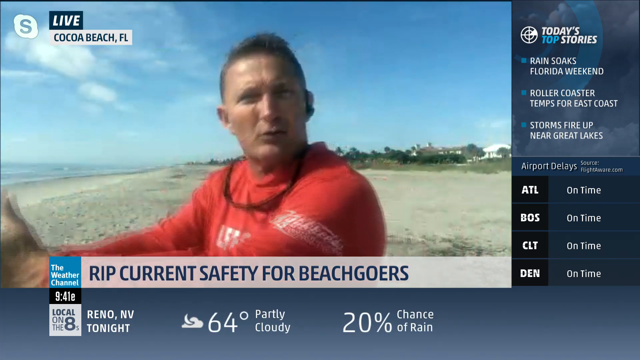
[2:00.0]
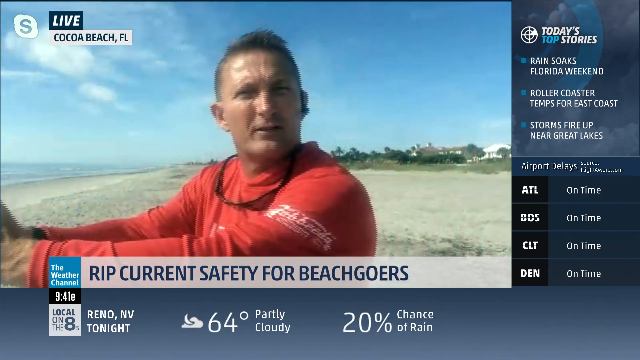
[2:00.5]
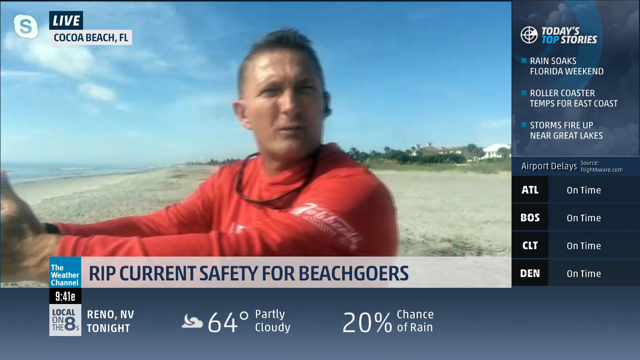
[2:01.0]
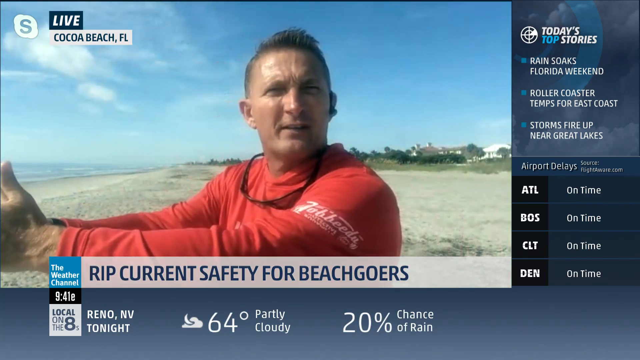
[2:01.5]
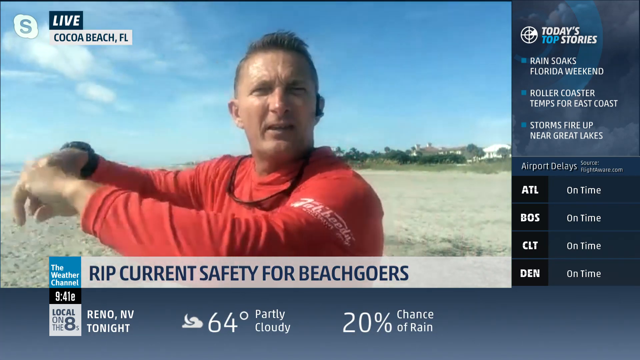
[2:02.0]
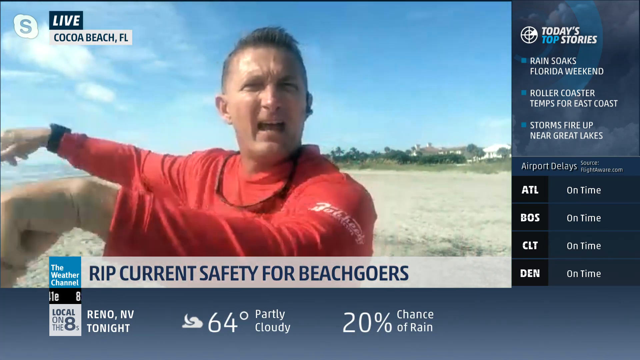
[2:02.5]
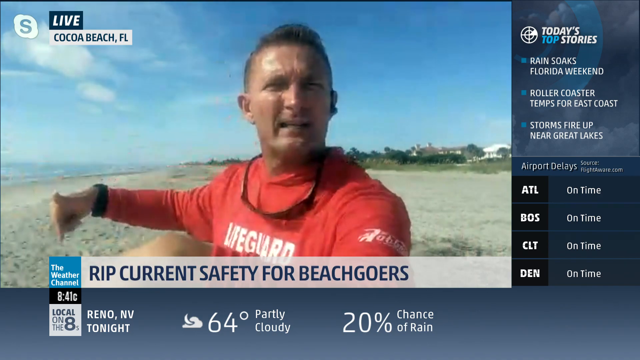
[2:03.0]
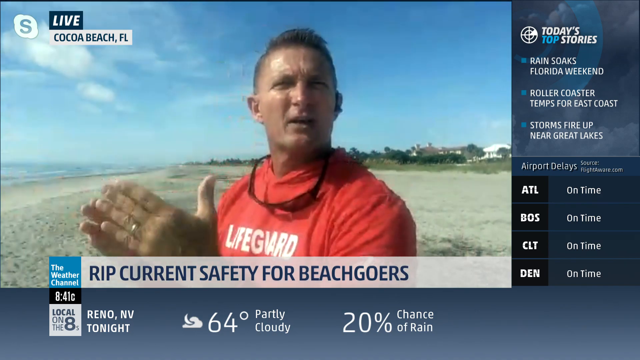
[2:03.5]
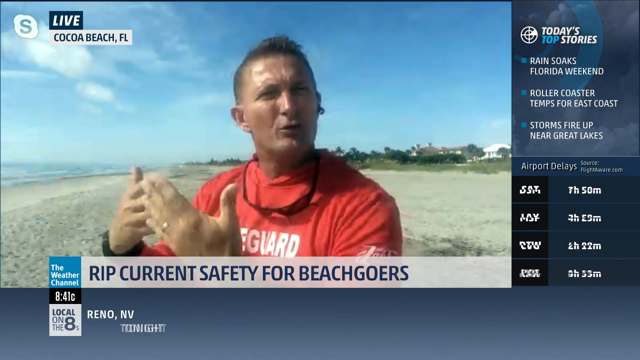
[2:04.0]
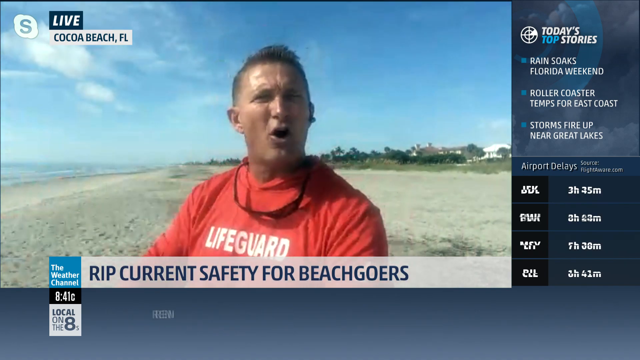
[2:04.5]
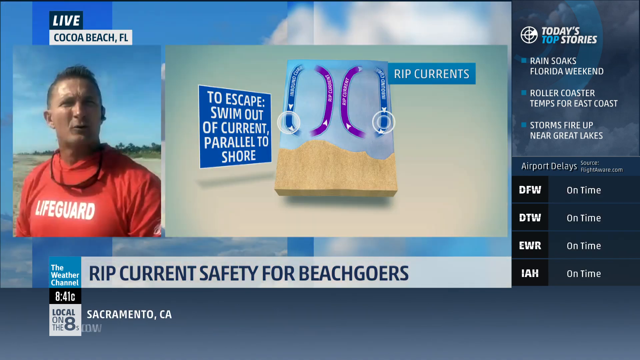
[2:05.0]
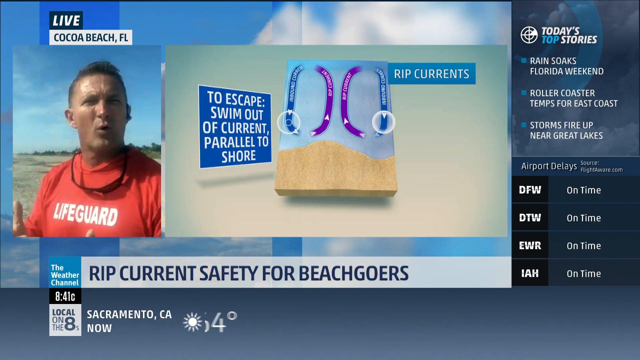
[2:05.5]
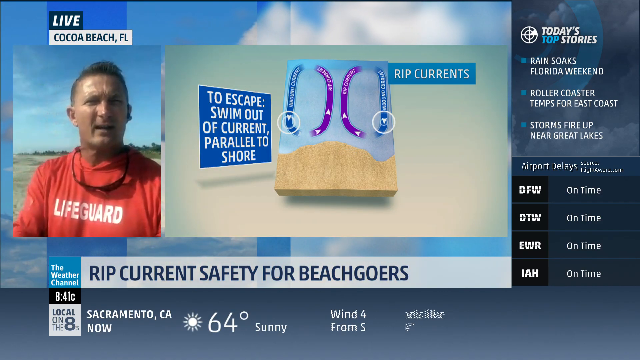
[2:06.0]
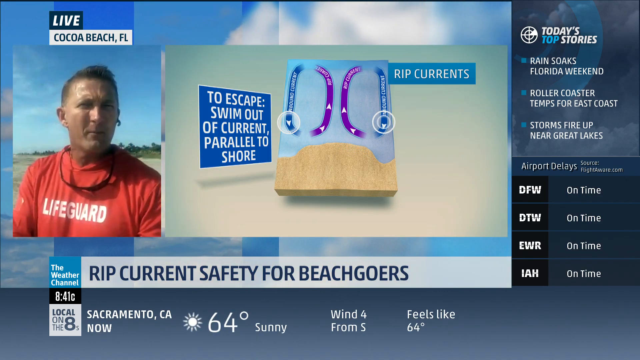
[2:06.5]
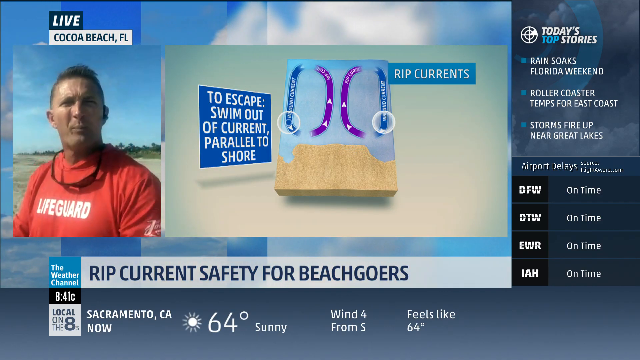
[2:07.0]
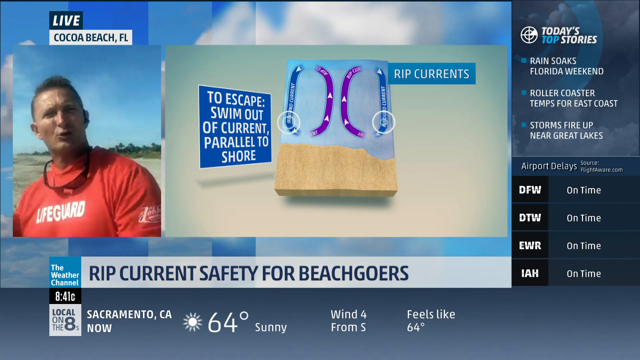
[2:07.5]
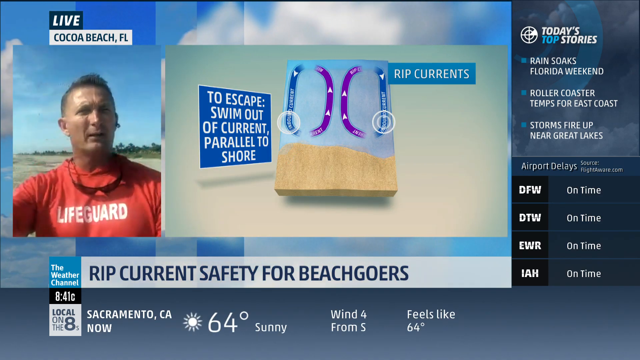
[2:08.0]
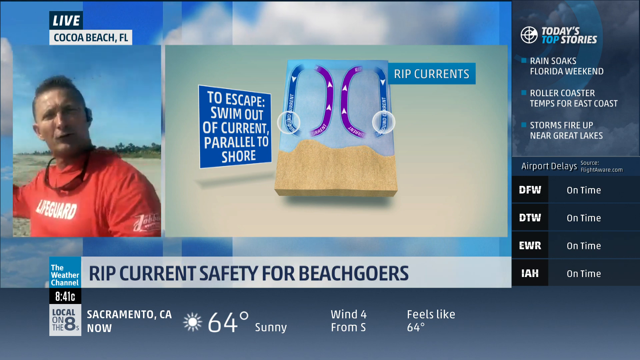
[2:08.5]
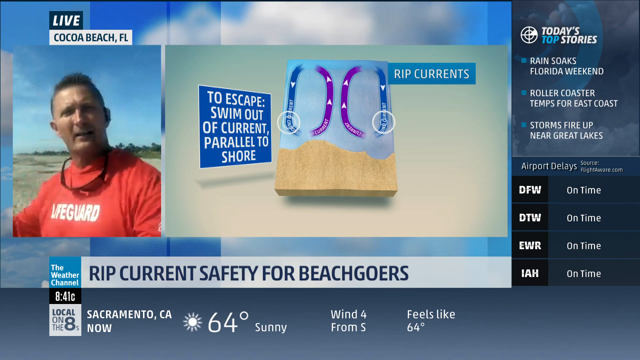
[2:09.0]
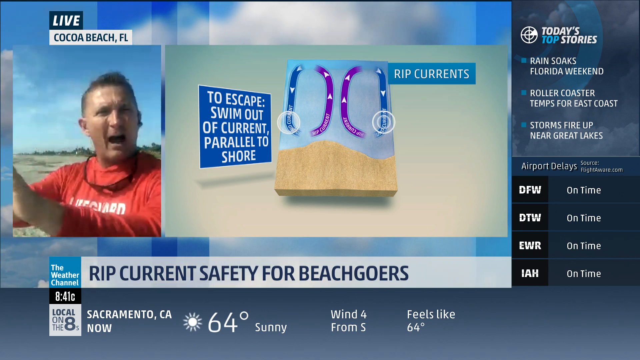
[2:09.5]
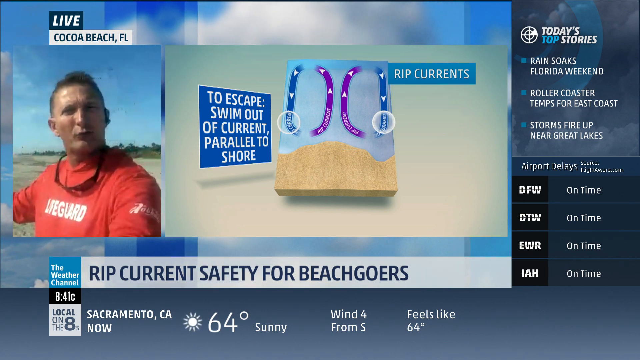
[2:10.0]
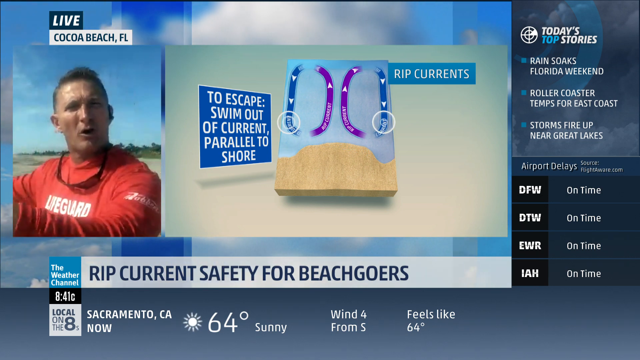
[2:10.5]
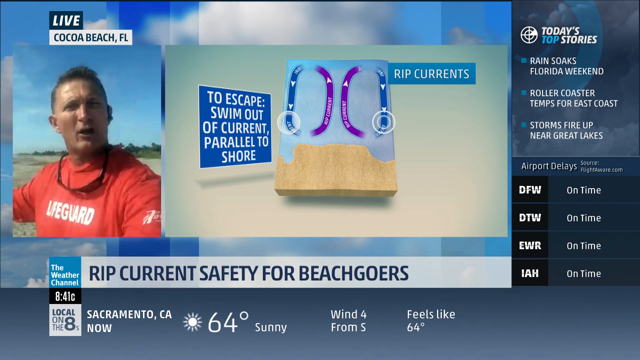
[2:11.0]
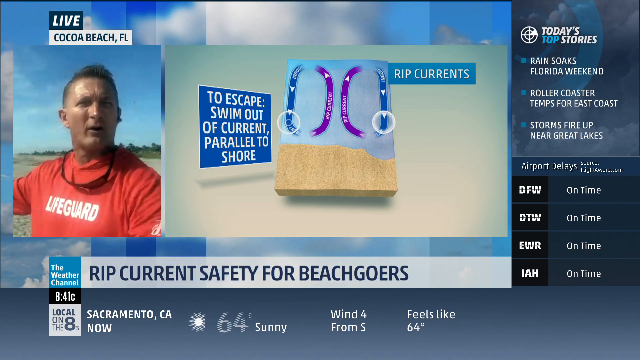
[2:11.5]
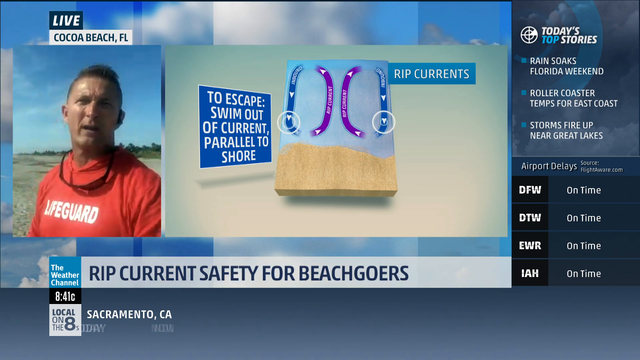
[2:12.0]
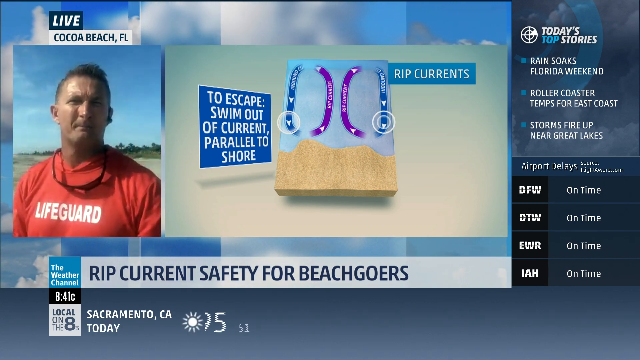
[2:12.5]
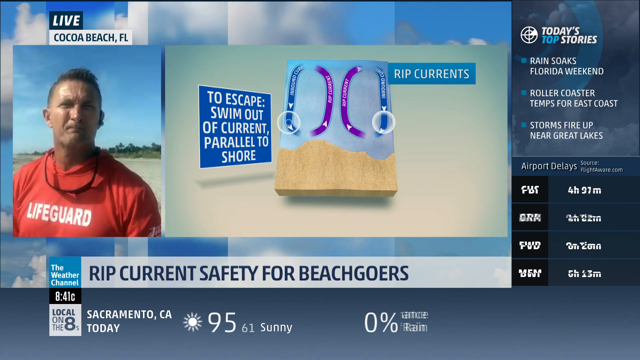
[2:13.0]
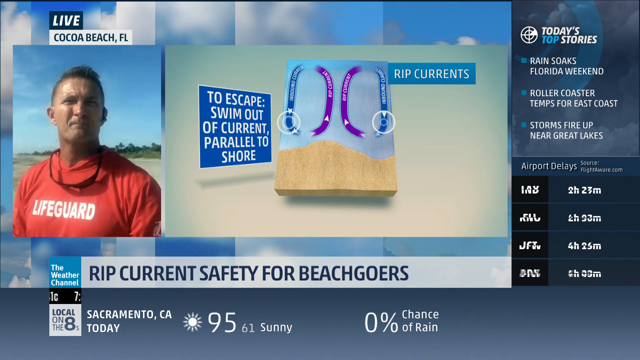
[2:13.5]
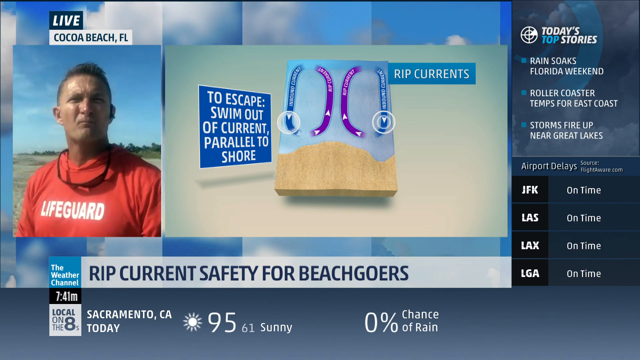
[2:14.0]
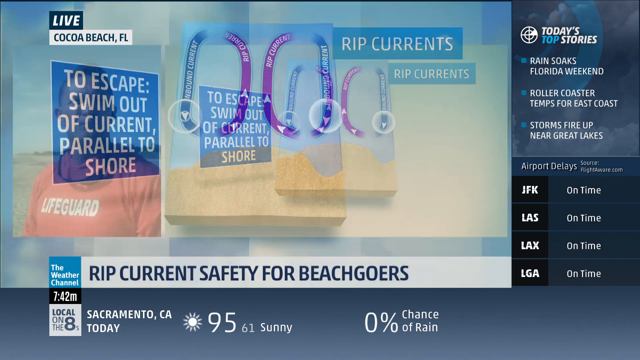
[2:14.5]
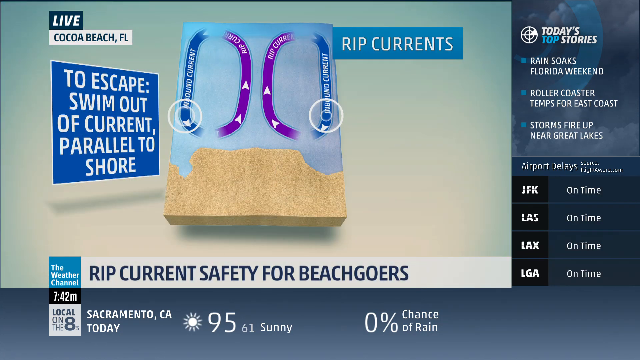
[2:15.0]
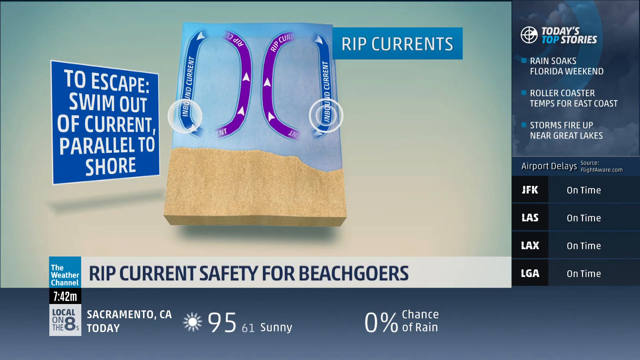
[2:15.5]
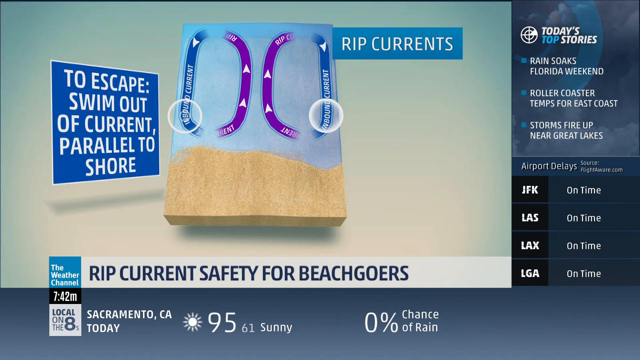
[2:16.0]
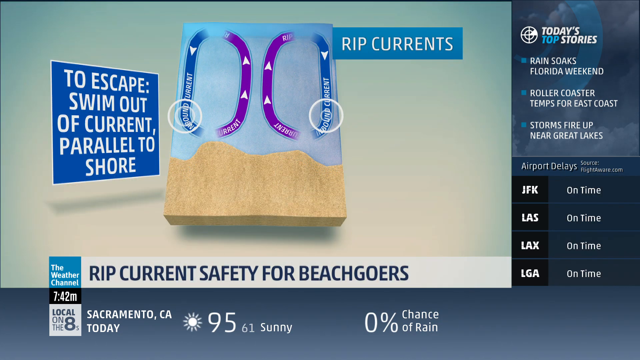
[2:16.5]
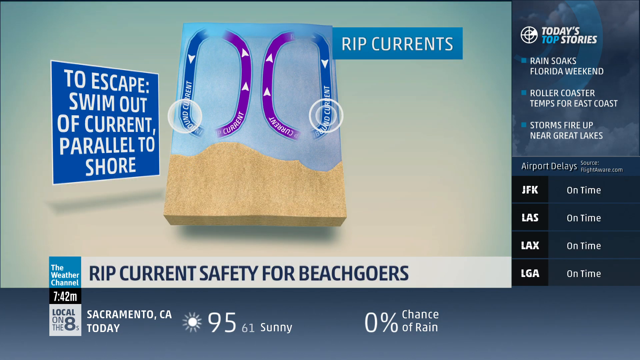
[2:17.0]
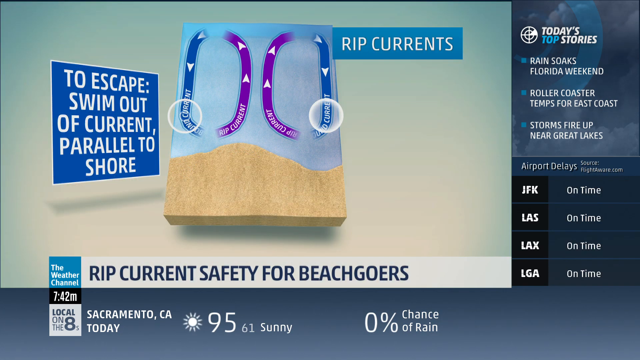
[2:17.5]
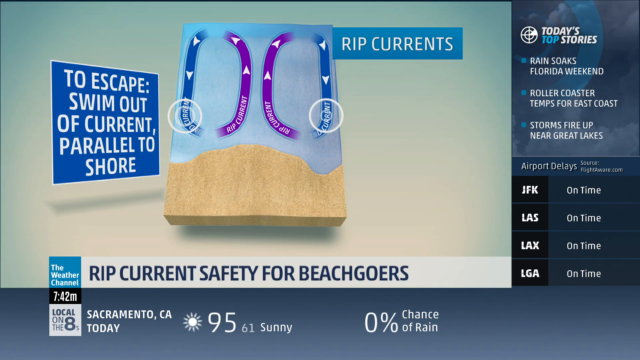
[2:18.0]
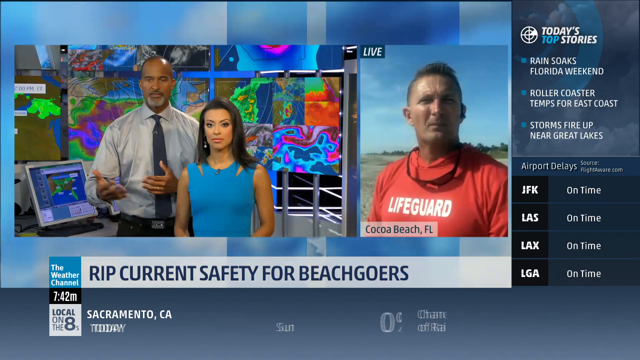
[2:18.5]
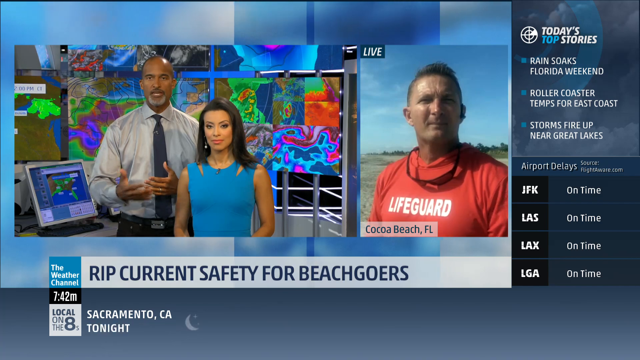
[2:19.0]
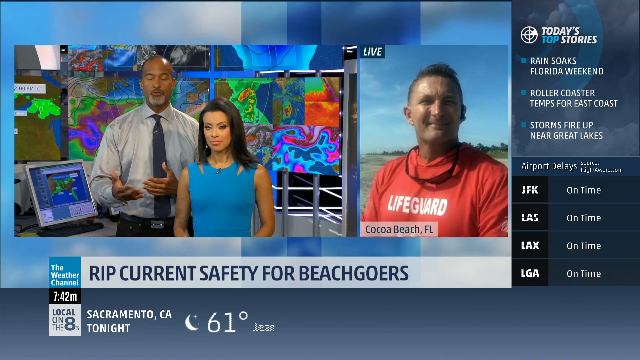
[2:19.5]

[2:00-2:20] A lifeguard is interviewed live at Cocoa Beach, Florida, under the text "rip current safety for beach goers." Next to him an animation reads "to escape, swim out of current parallel to the shore" and shows the pattern of rip currents with arrows. The two newscasters appear in the studio with weather monitoring screens behind them, talking to the lifeguard, who is remote on the beach at Cocoa Beach. A ticker below shows Reno, Nevada at 64, partly cloudy, and Sacramento, California at 64, sunny. On the top right, today's top stories read "Rain soaks Florida weekend," "roller coaster temps for east coast," and "storms fire up near Great Lakes." Airport delays follow: JFK, LAS, LAX, and LGA are all on time.